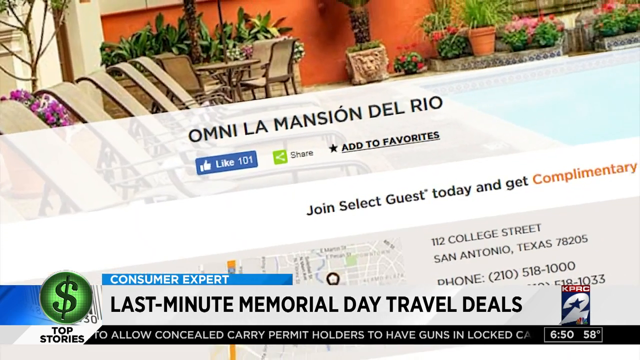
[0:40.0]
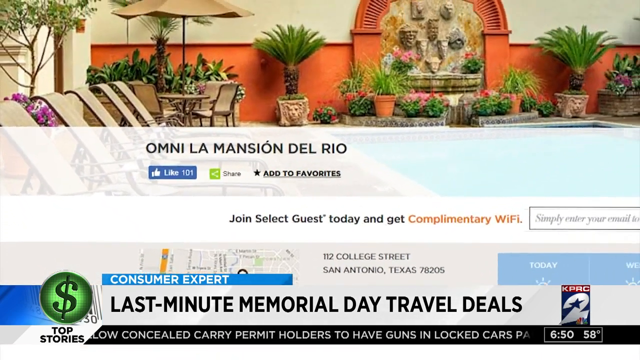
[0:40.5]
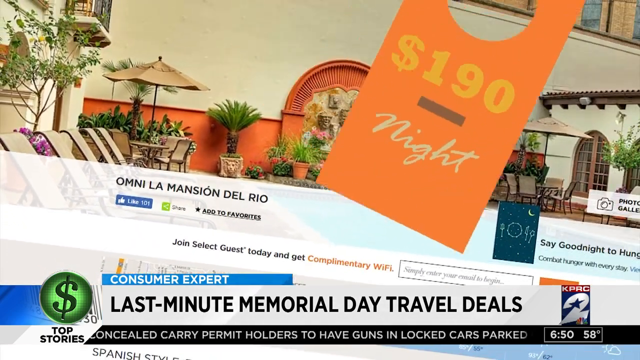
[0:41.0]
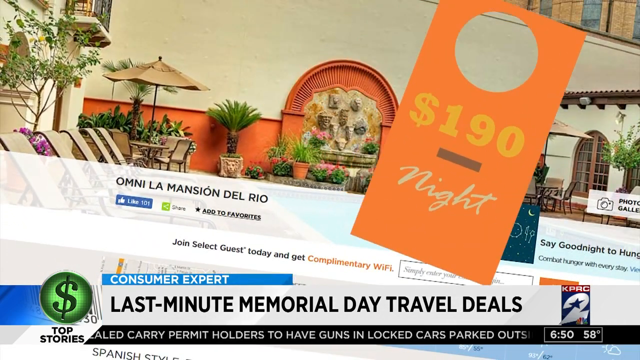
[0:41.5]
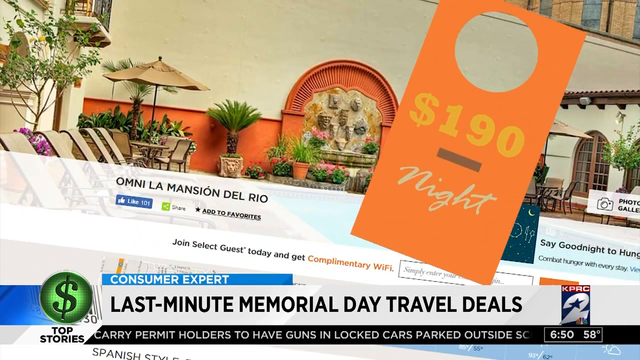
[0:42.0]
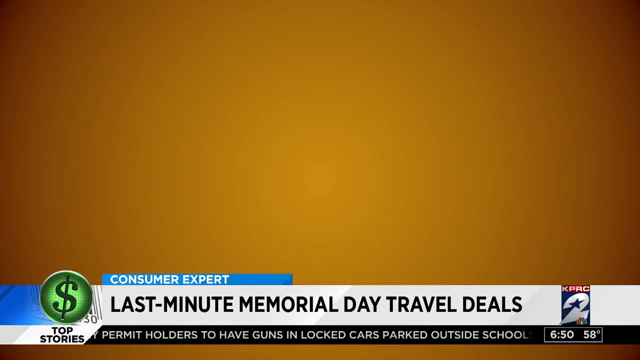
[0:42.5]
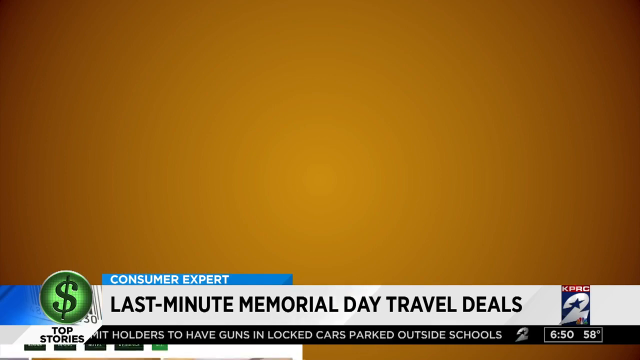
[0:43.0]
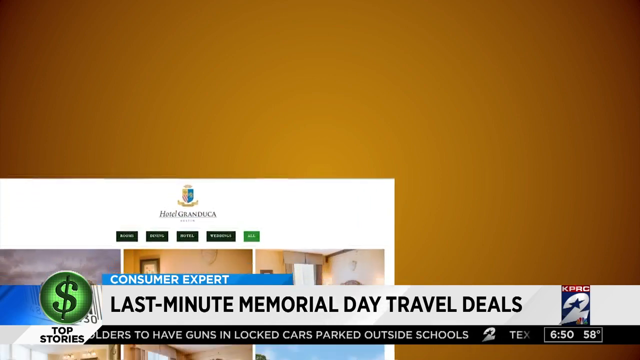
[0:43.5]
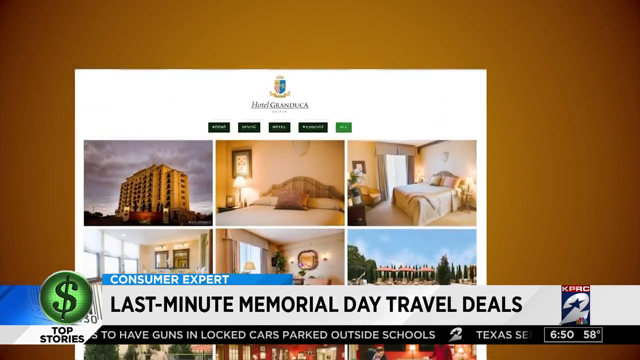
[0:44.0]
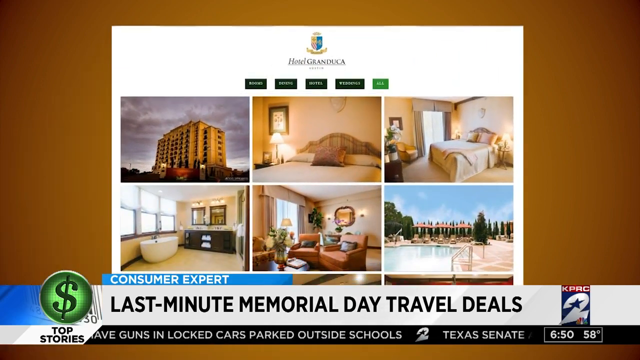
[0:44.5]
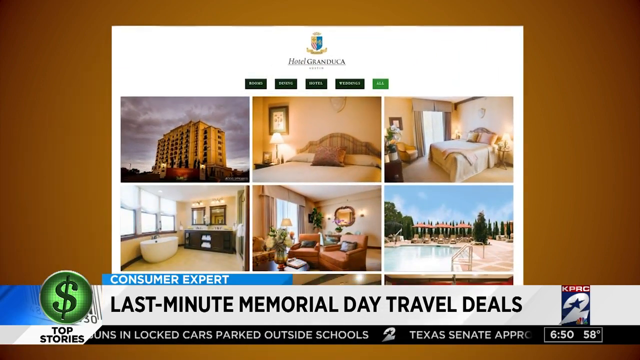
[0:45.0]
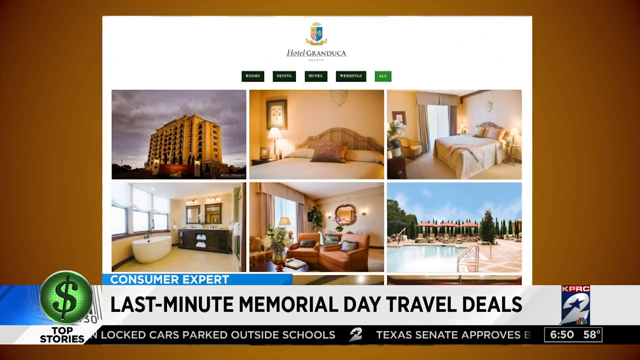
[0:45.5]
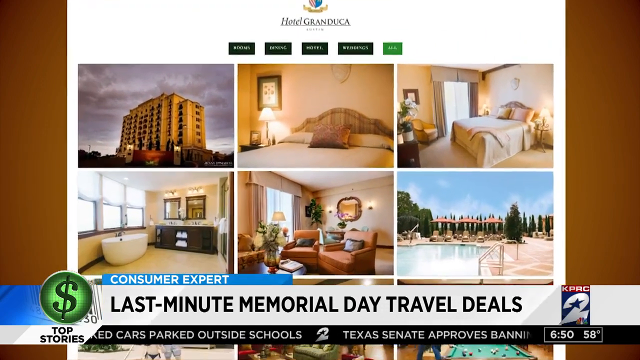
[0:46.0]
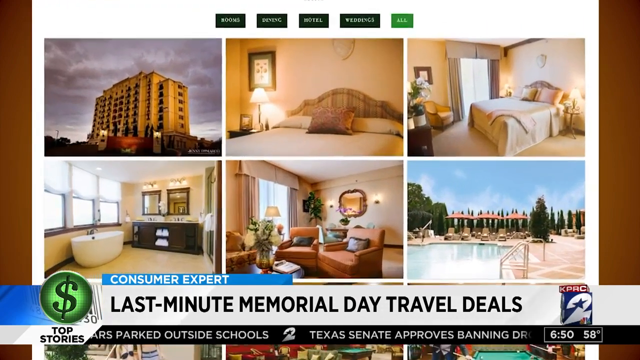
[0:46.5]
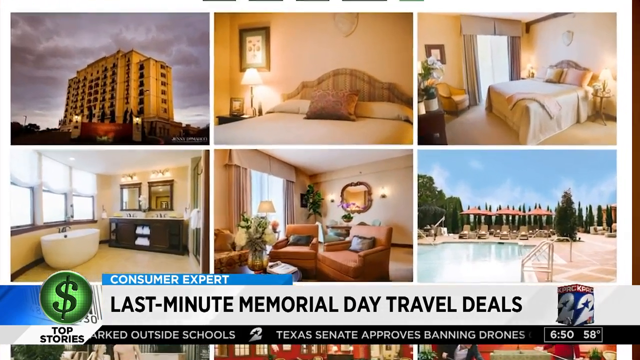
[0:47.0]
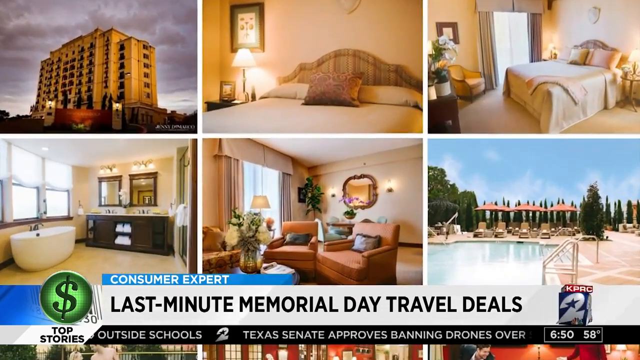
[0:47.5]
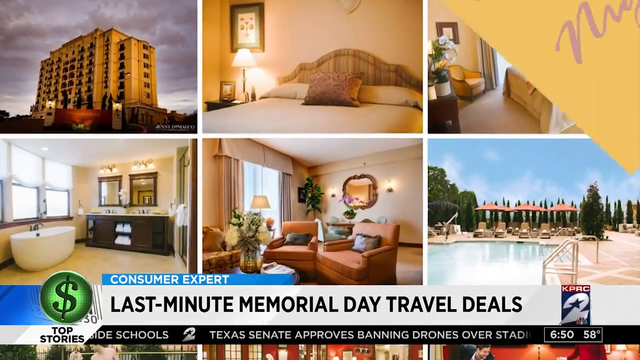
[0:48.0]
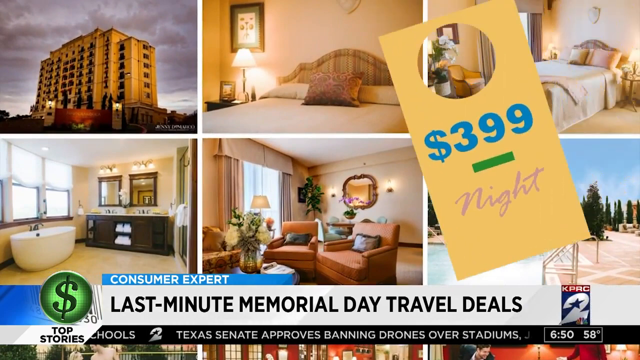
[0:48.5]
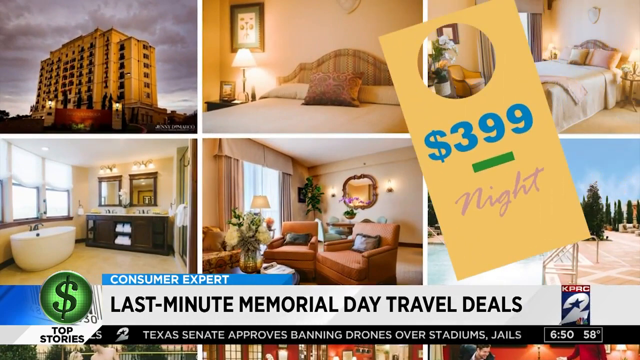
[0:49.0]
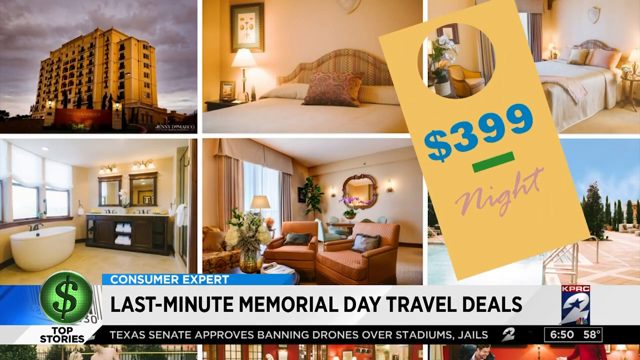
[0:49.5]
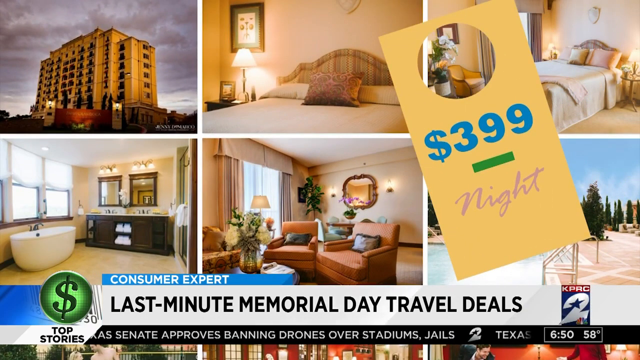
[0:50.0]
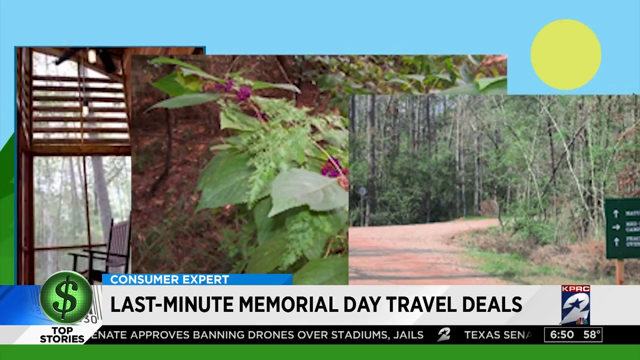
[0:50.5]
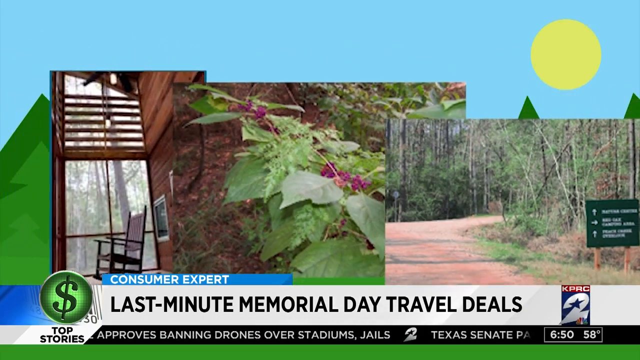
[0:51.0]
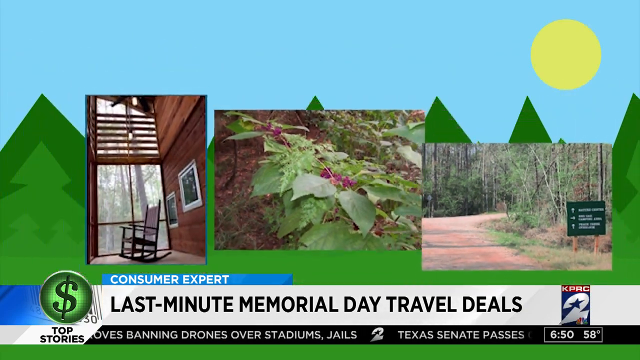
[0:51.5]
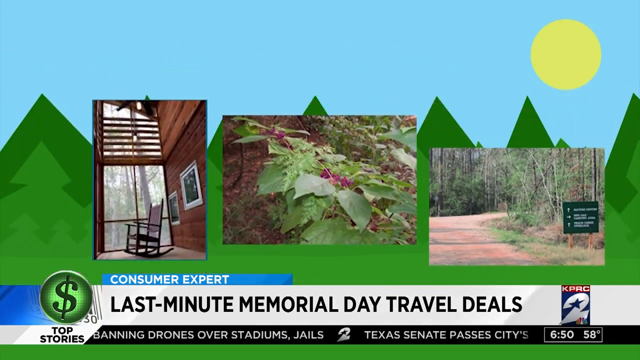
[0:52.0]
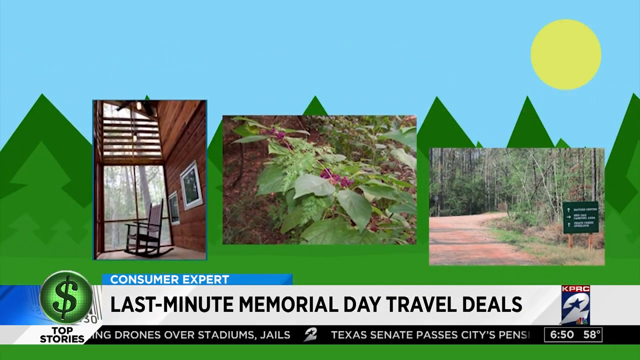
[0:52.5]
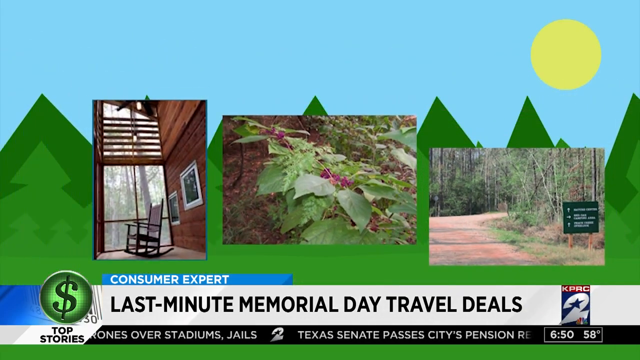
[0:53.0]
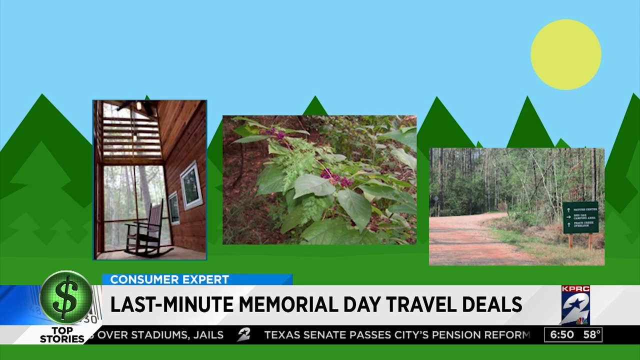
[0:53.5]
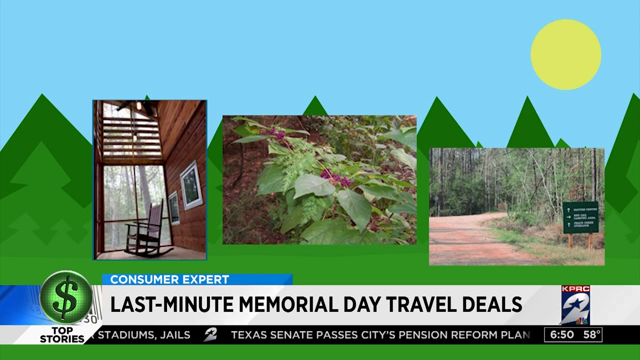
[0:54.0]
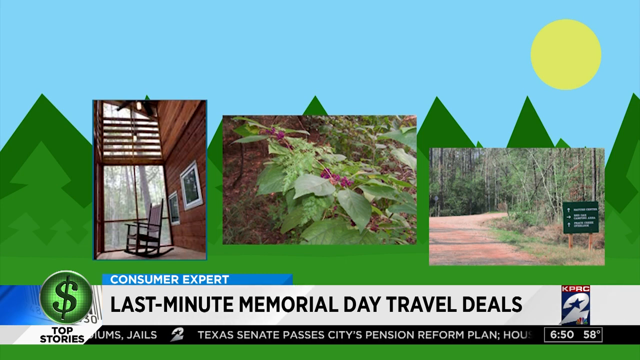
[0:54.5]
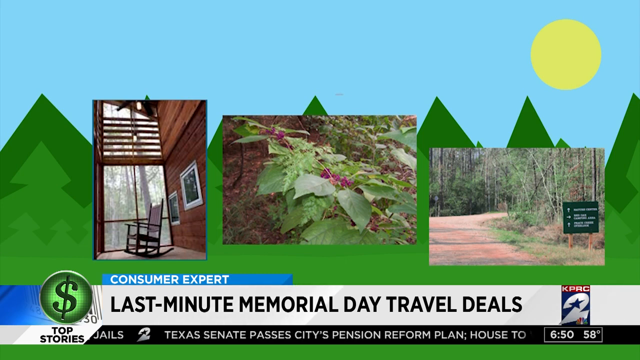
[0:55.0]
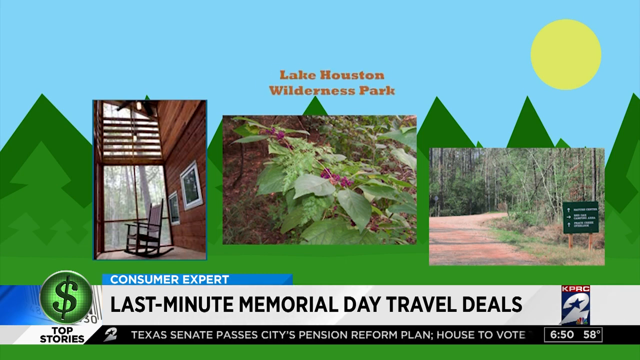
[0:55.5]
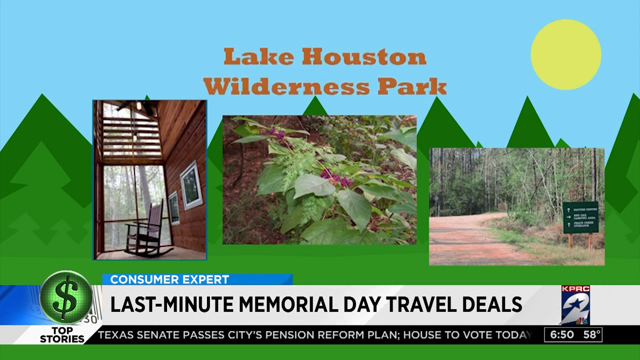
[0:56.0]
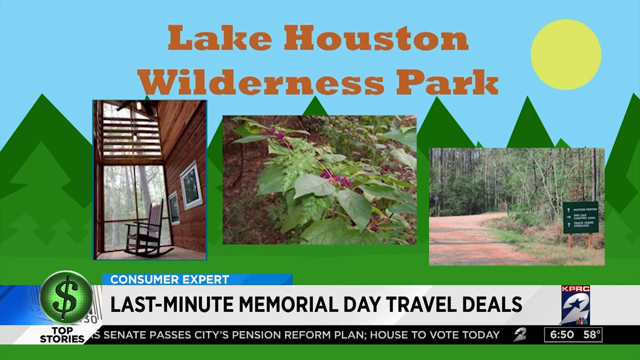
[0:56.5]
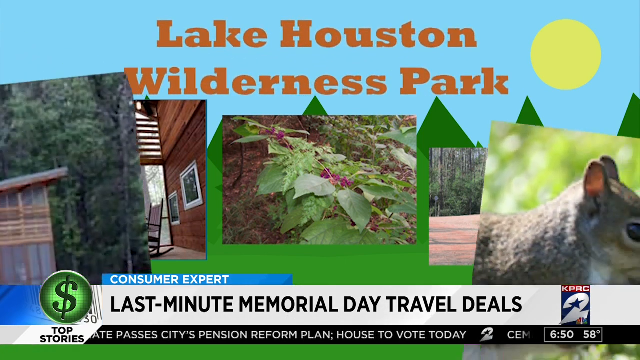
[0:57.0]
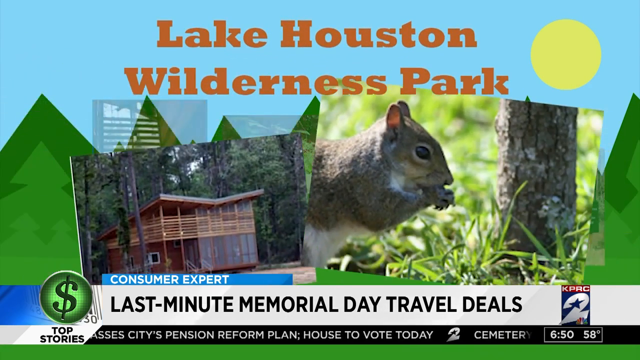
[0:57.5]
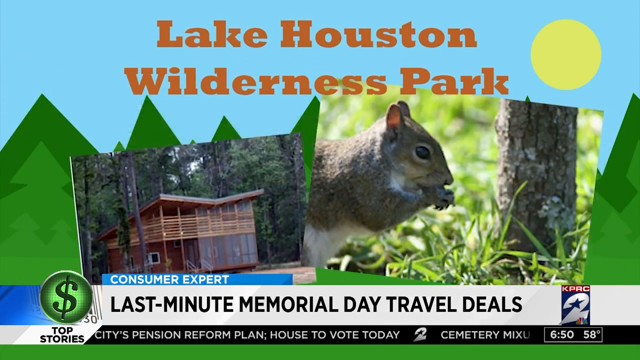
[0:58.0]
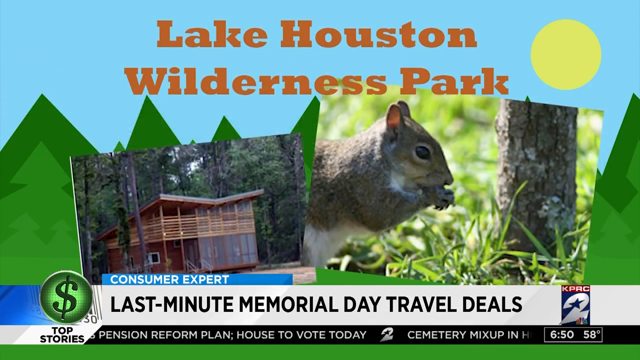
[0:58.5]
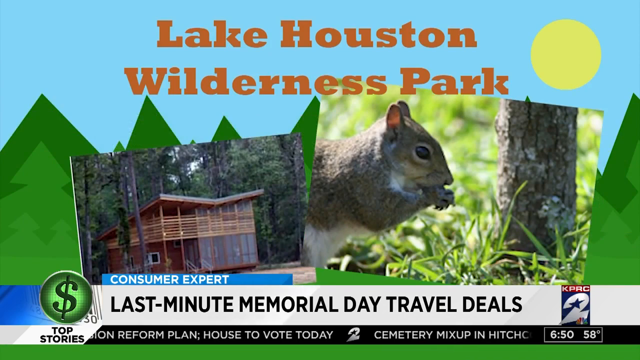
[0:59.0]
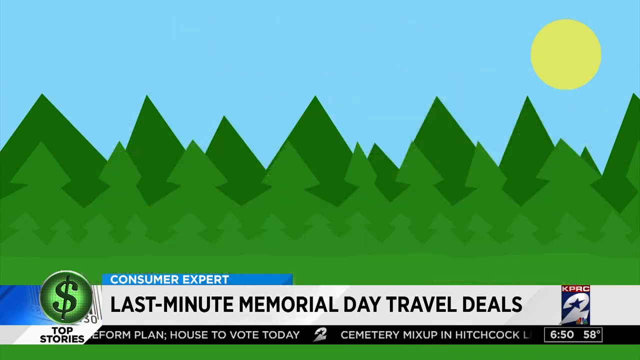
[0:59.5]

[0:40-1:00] The news report continues. A tag appears in the top right: an orange, sort of price-tag shape resembling a hotel door hanger, with a circle in the middle, the price "$190" right below it, and "night" at the bottom. Apparently the hotel in question is the Omni La Mansion Del Rio. Then a picture of the website of a hotel called Hotel Randuca appears, with many photos showing the building, the beds, the bathroom, and the pool.